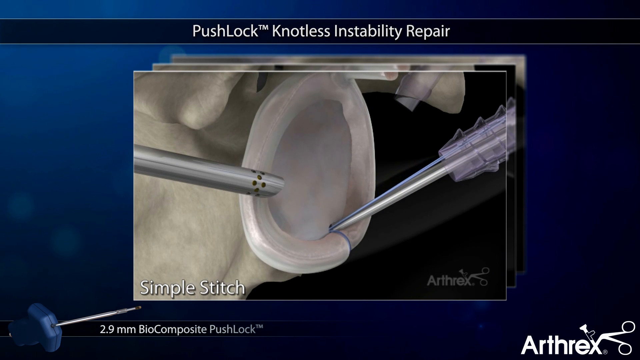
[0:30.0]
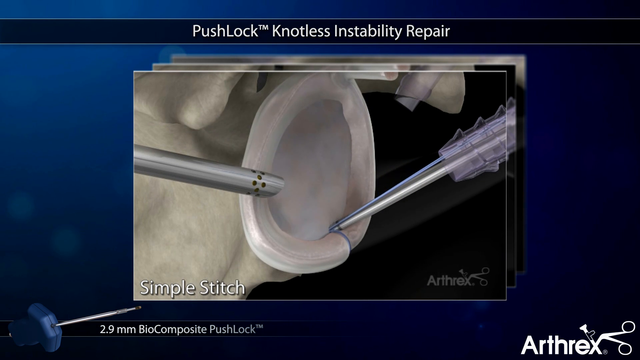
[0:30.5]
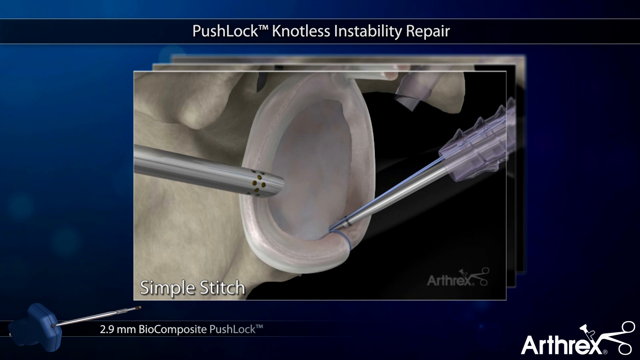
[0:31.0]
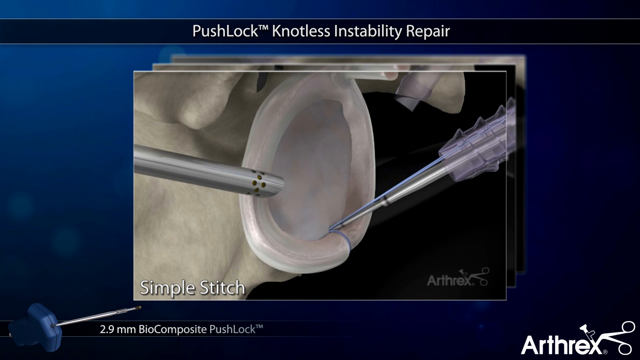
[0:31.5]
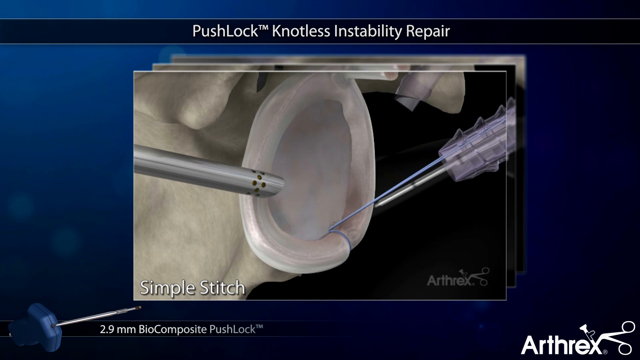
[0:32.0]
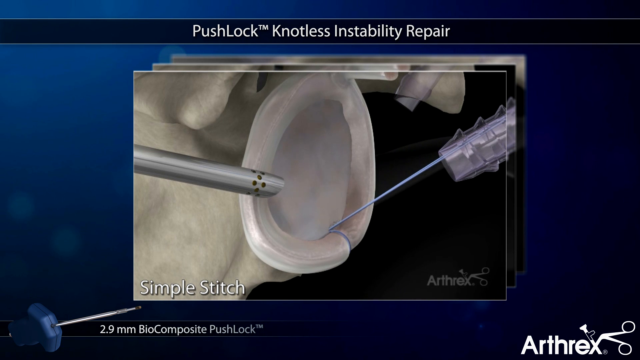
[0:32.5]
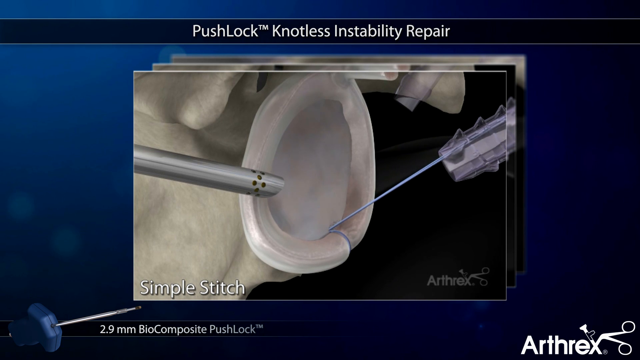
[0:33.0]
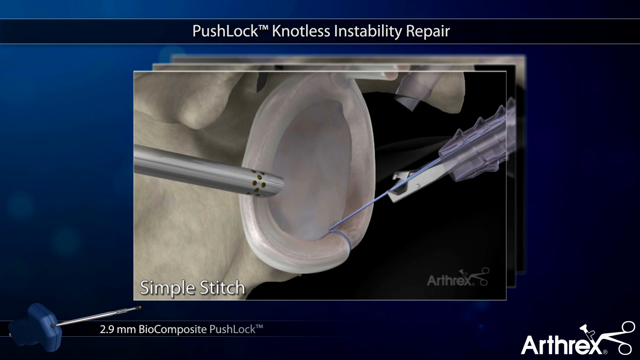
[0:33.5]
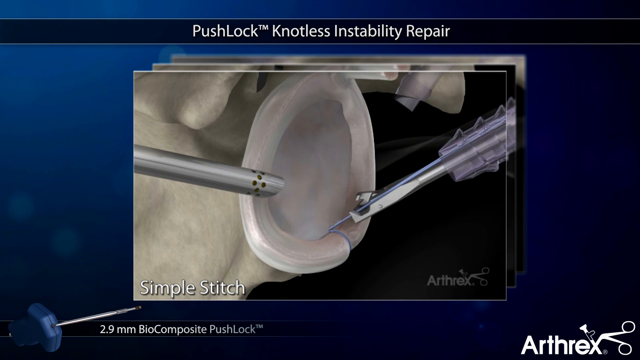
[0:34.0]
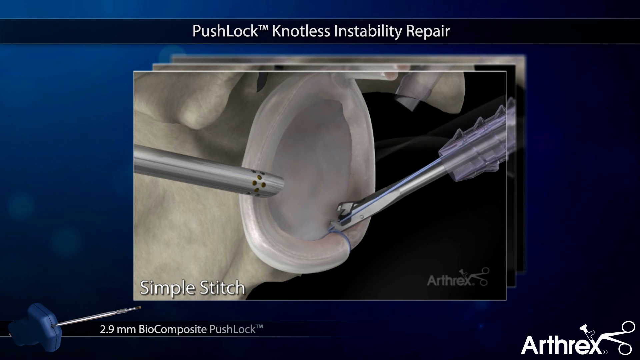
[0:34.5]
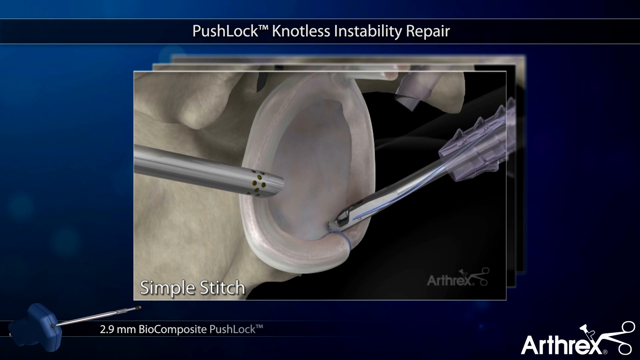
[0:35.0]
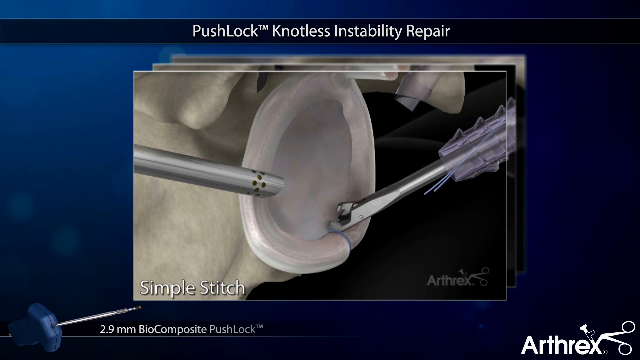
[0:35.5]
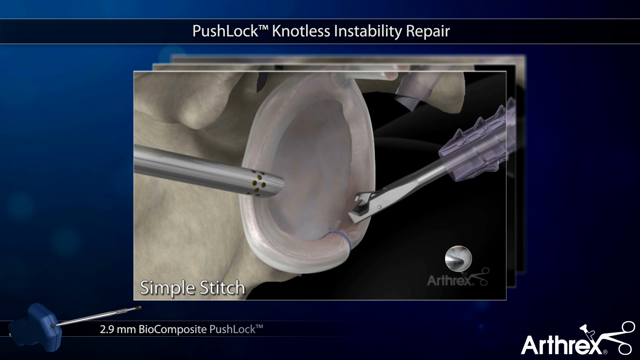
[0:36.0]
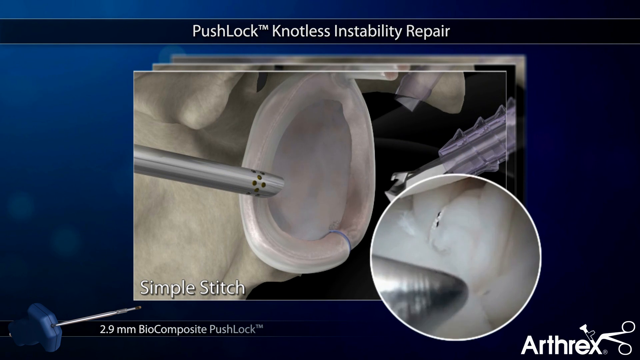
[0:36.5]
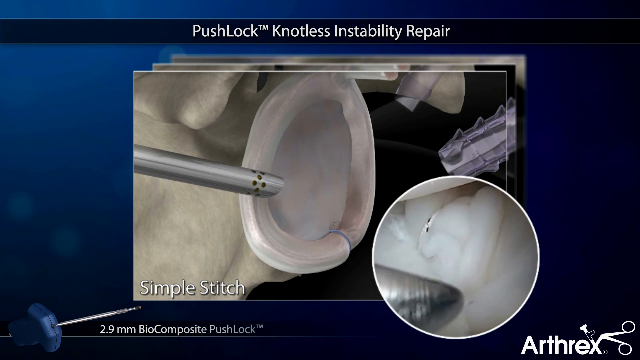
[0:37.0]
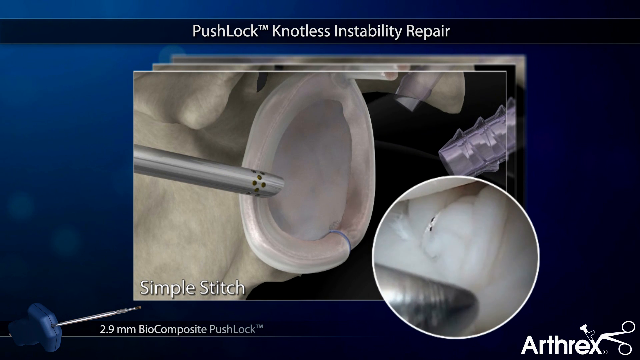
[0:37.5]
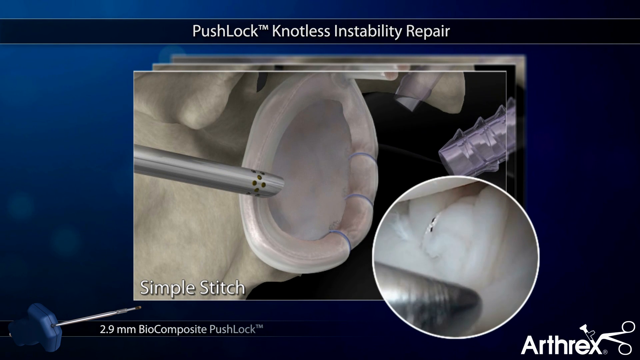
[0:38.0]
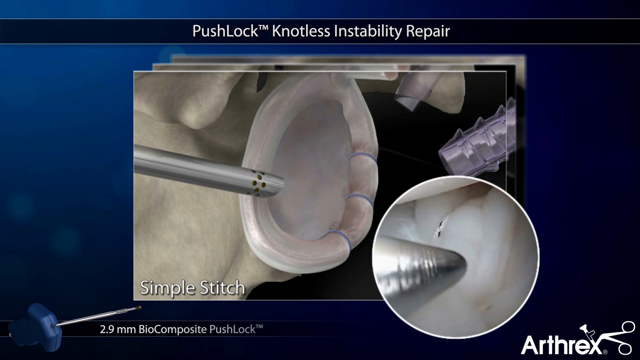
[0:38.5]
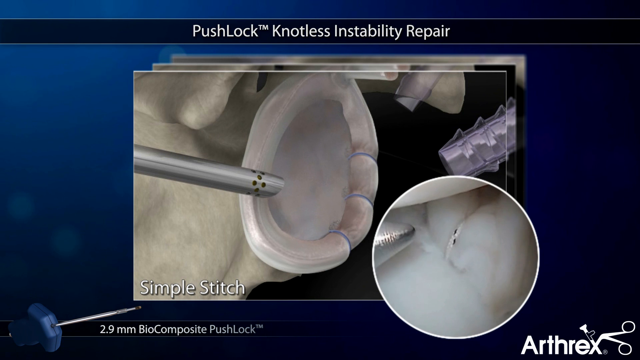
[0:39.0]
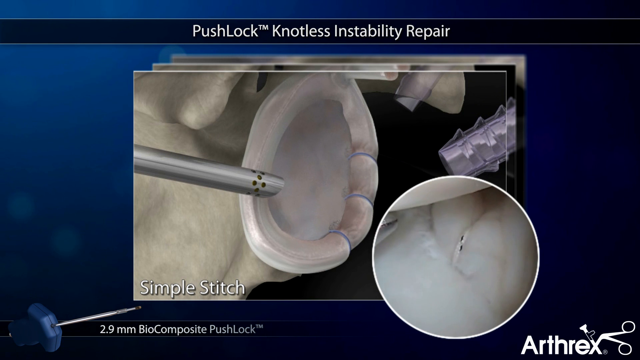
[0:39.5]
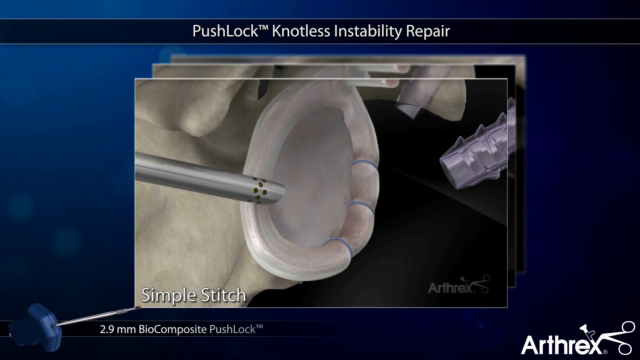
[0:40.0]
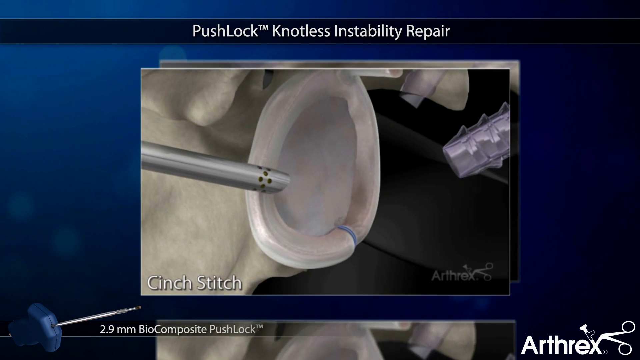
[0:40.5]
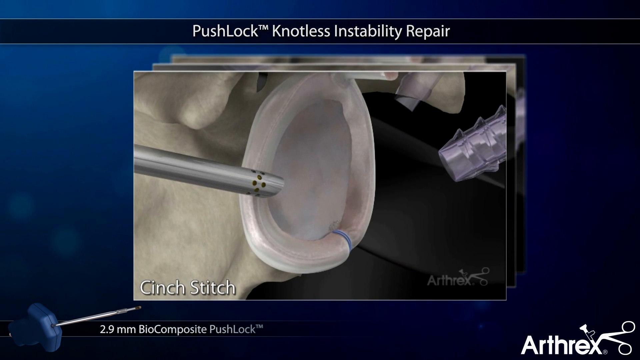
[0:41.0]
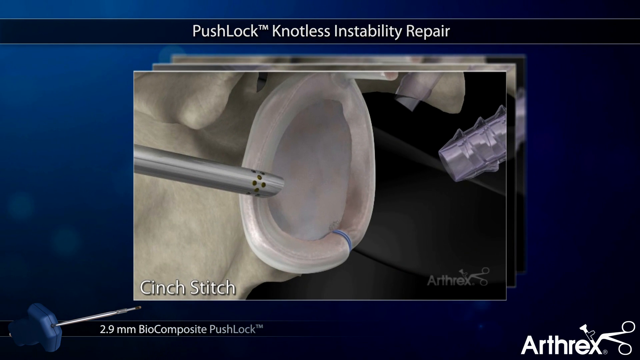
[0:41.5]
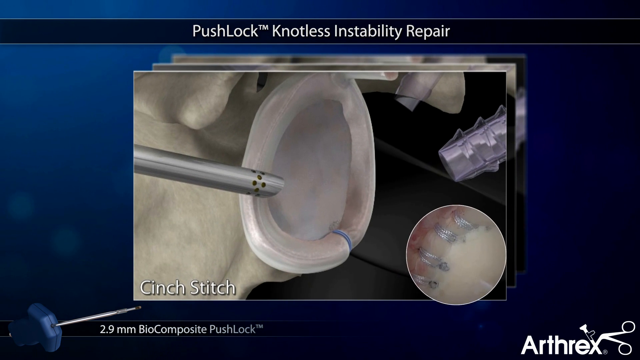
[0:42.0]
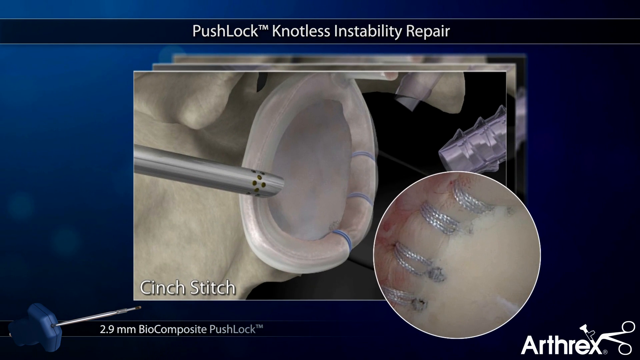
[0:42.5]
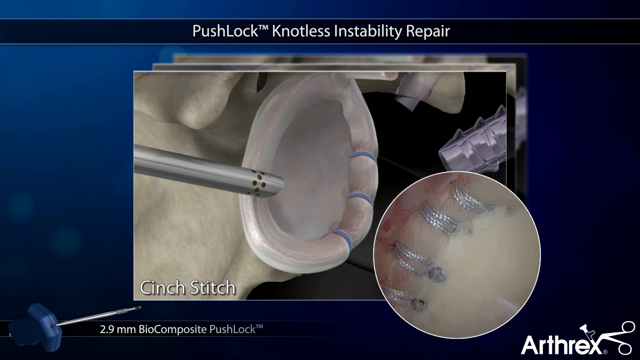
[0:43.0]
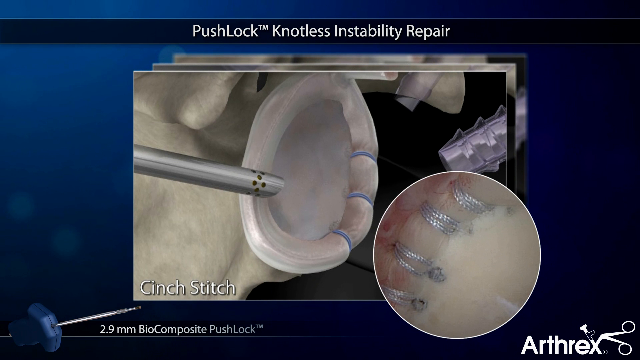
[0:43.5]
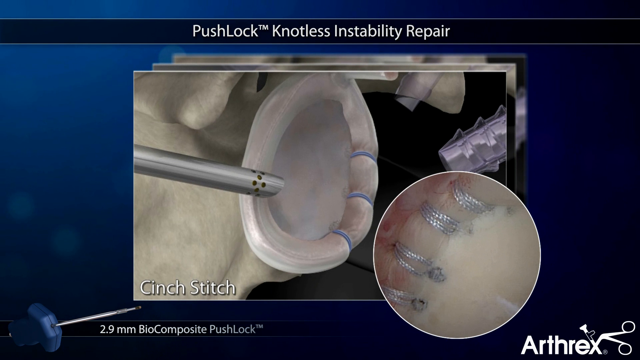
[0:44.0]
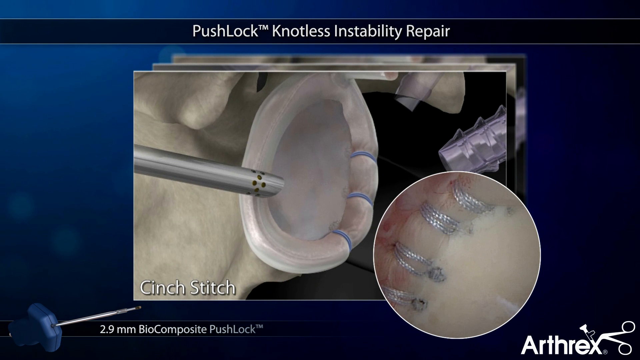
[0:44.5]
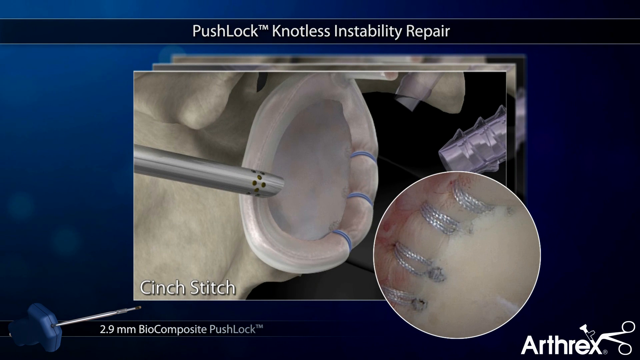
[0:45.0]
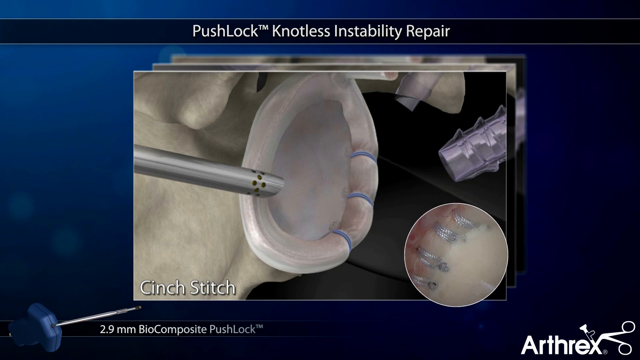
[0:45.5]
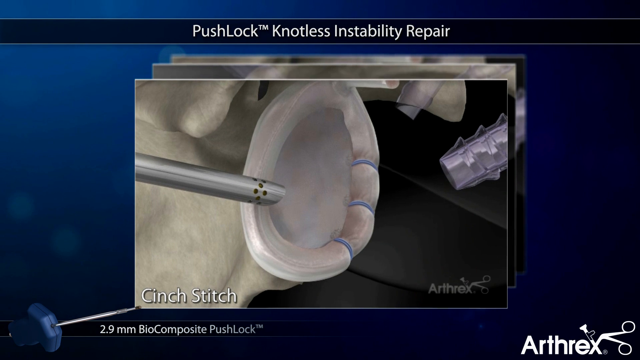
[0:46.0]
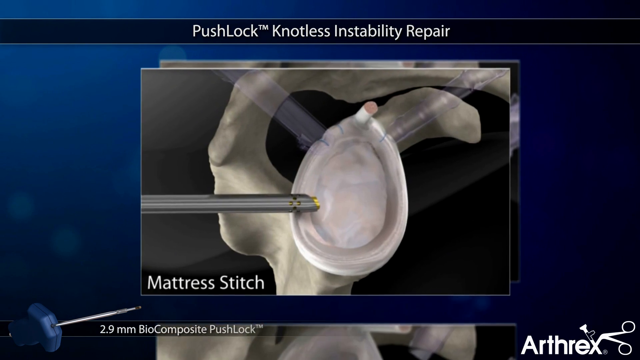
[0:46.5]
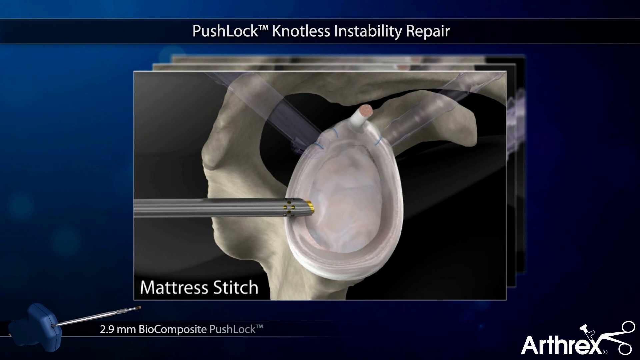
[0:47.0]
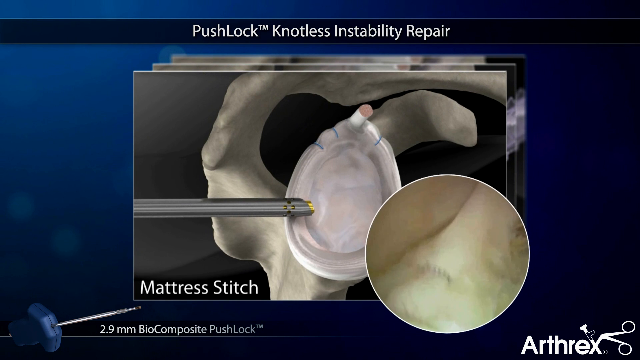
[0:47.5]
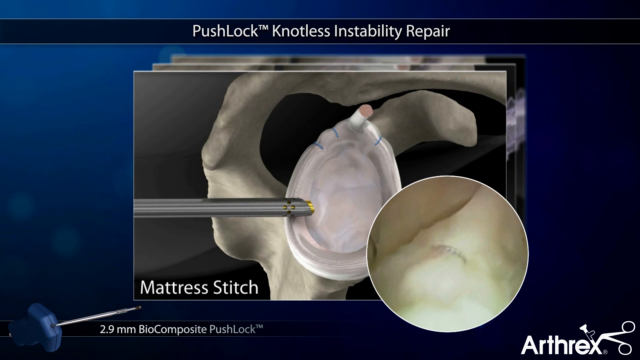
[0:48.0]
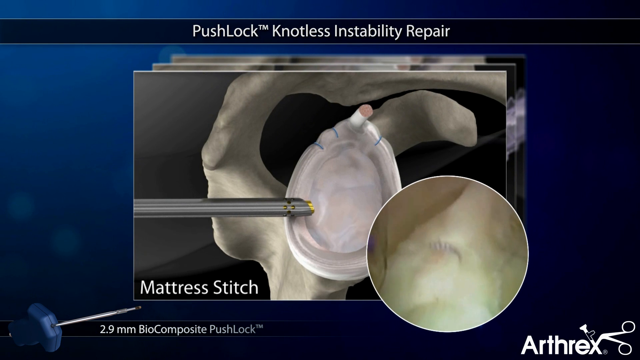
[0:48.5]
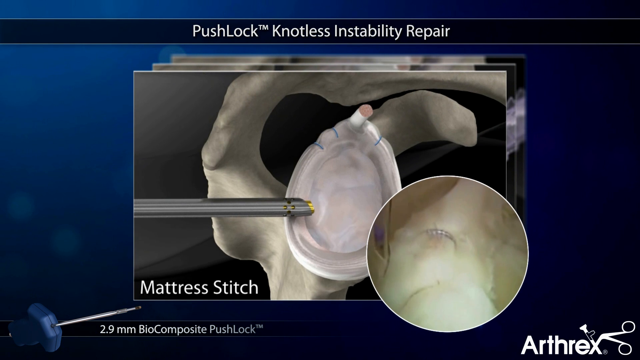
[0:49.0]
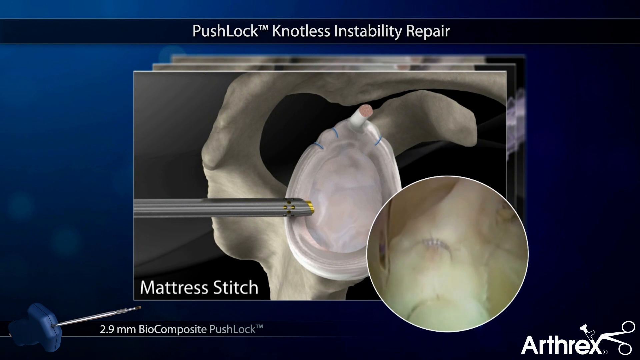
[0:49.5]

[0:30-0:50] Something comes out of the slender implement, the one with the thread, to cut the thread after the stitch has been secured. The object now has three stitches in it. The implement is shown working again, and at the same time an inset shows a picture of what a large number of these stitches look like. The thick silver item is just holding something in place. The object can now be seen inside some kind of bone, being attached to it. Near the end, information appears at the lower right-hand corner, along with the Arthrex corporate logo in the lower corner. The inset showing the stitches closes by shrinking and fading, leaving just the slide.